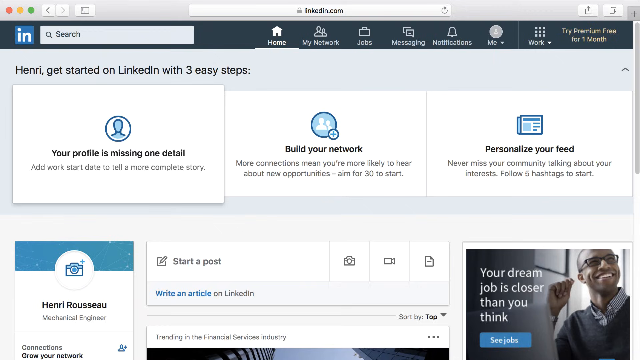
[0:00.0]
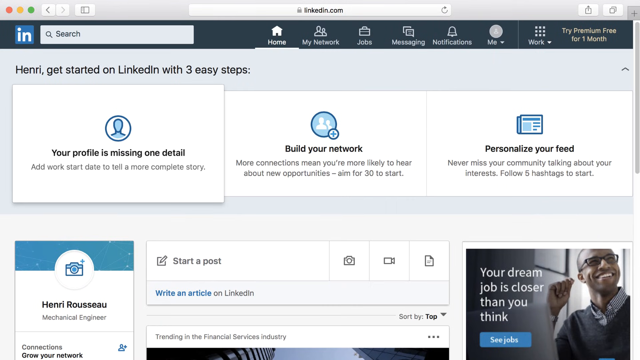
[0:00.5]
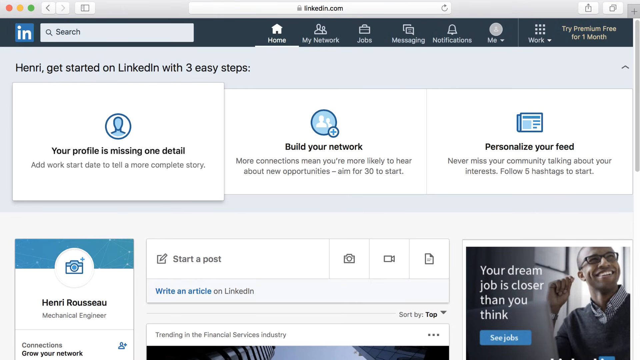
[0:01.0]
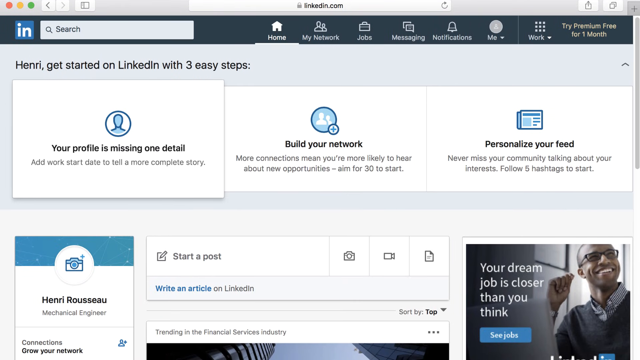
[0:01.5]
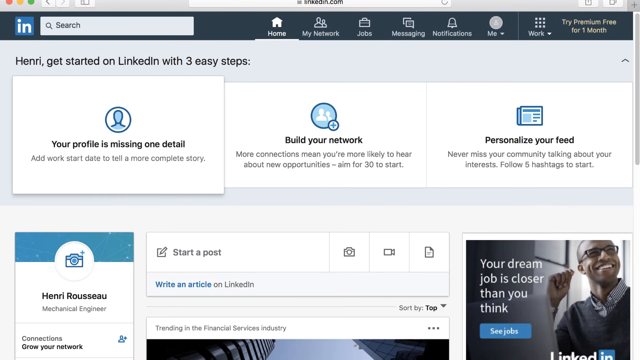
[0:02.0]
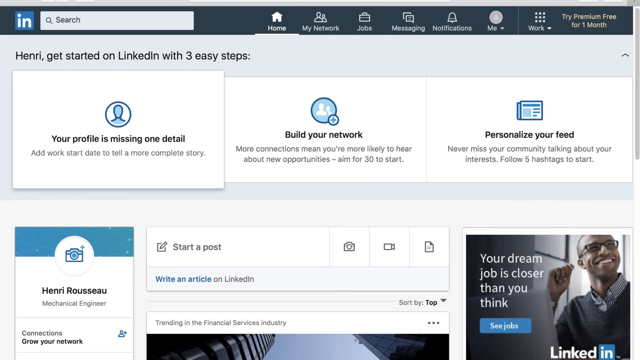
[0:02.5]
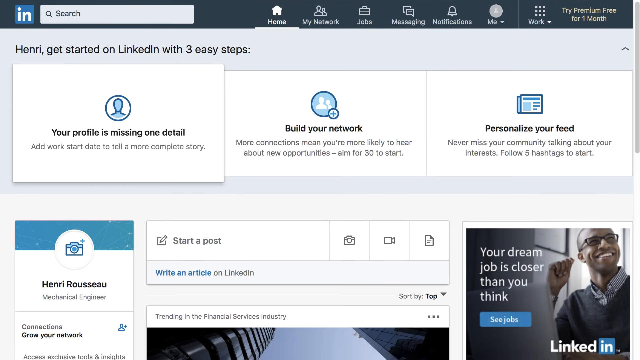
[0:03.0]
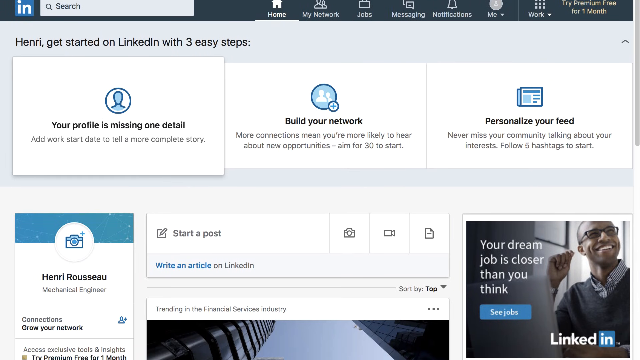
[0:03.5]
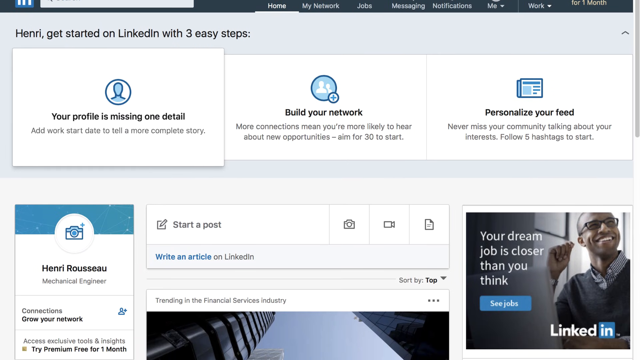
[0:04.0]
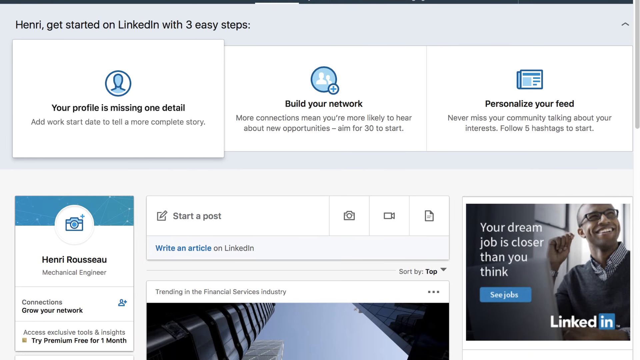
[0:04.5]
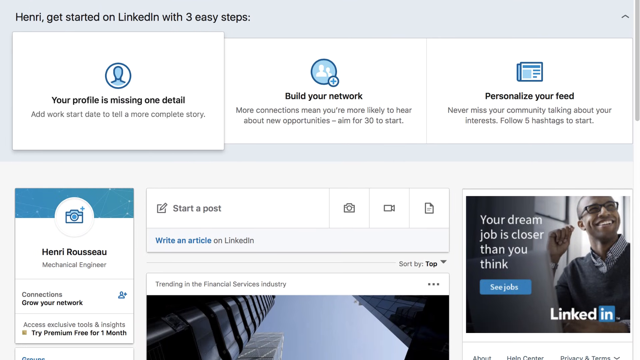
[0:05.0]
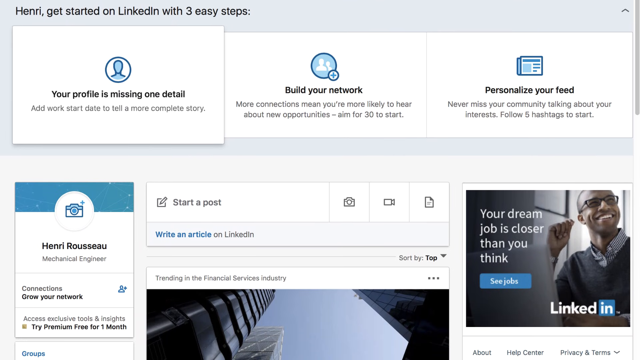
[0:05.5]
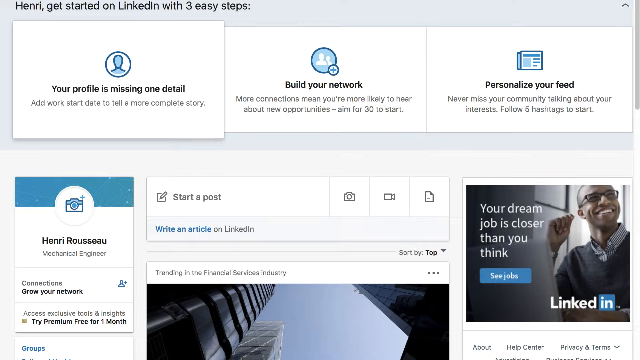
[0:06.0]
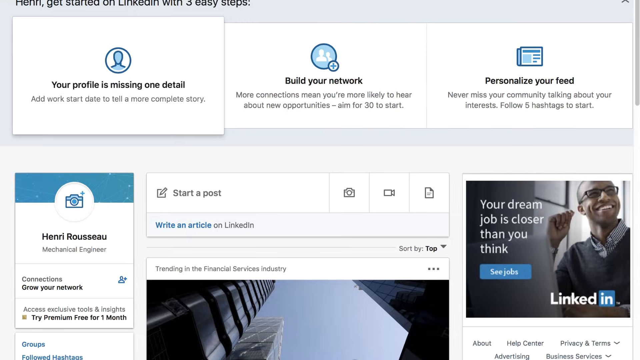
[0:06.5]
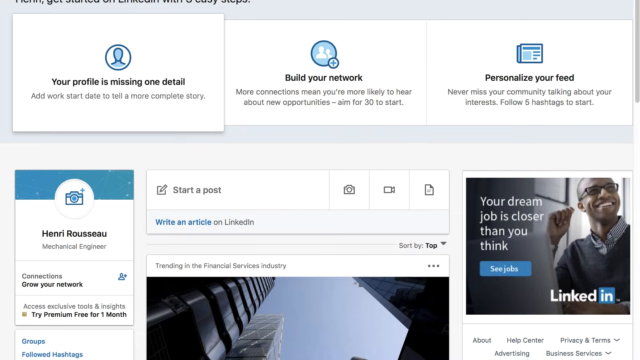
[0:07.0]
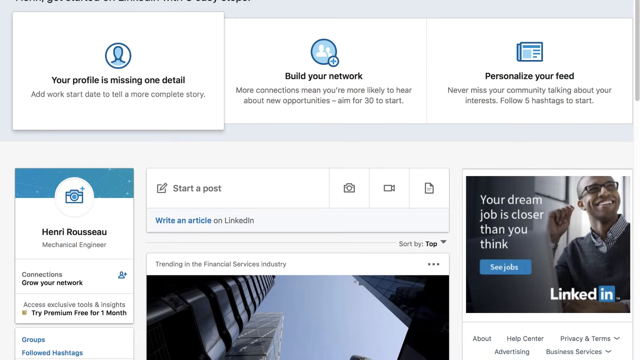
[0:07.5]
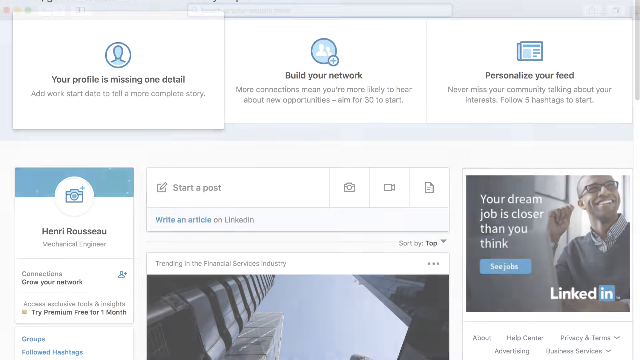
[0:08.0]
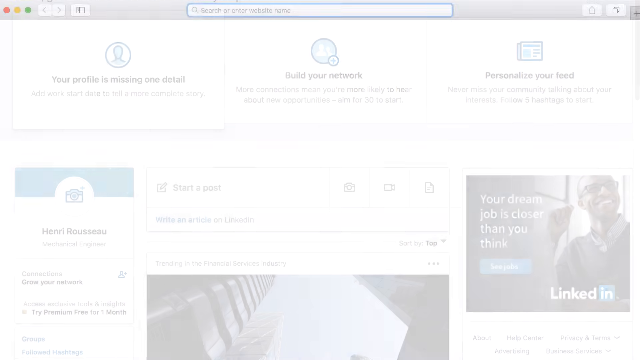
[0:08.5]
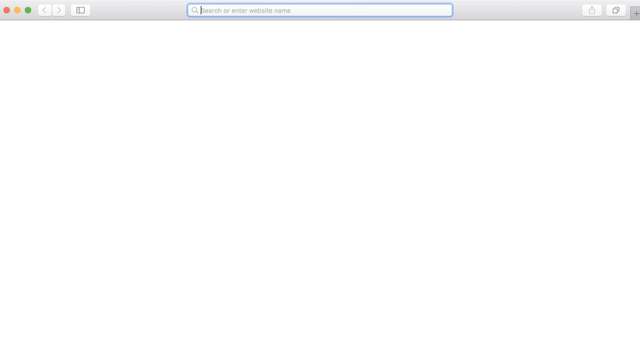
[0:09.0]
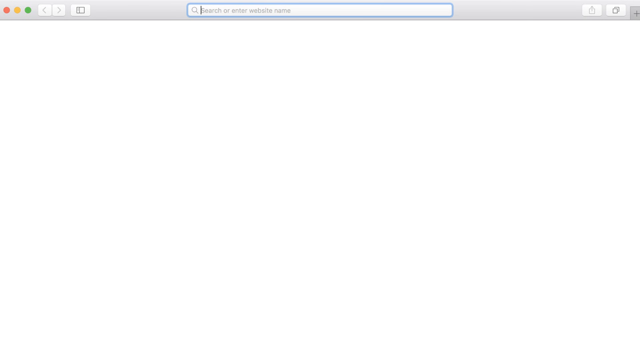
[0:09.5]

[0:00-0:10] A LinkedIn profile of someone is shown. The profile indicates one missing detail, and another part shows "build your network" along with a personalized feed. There is a picture of a person who seems to be happy. The profile is not really filled in: most of the places are empty, and it does not even show the name of the person.